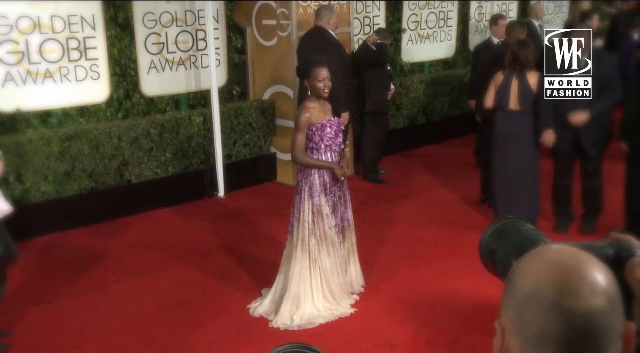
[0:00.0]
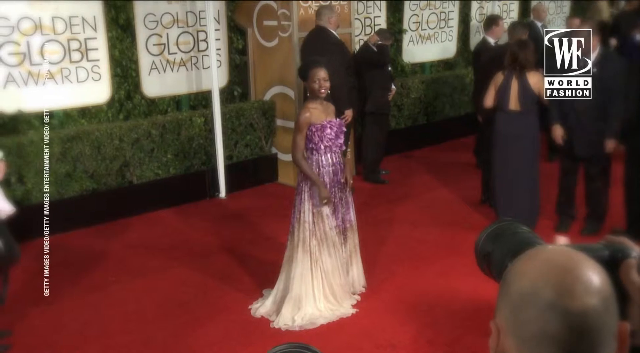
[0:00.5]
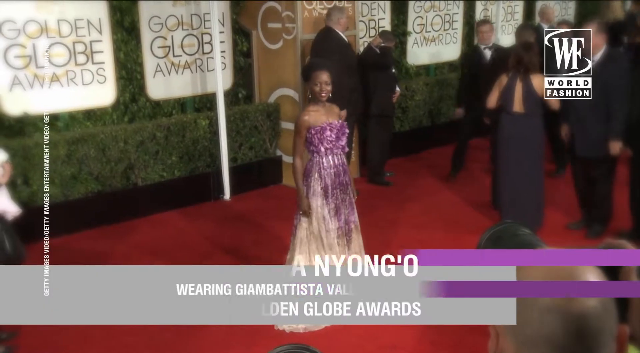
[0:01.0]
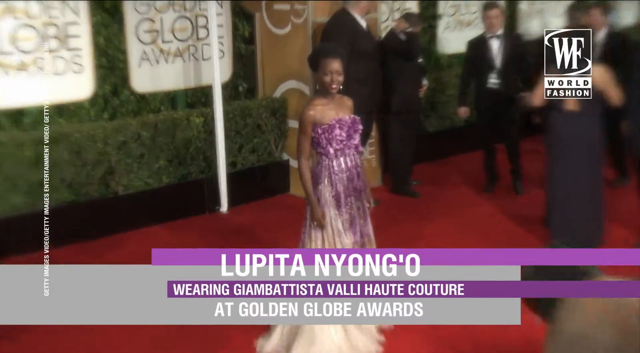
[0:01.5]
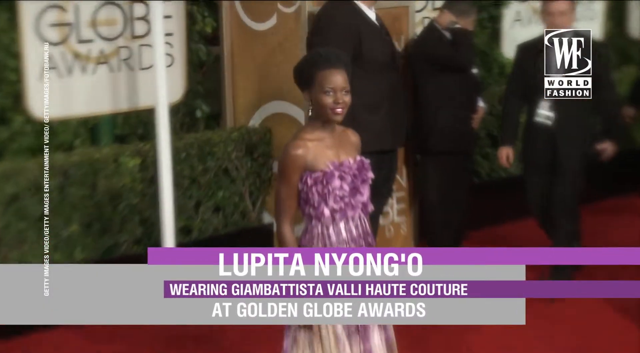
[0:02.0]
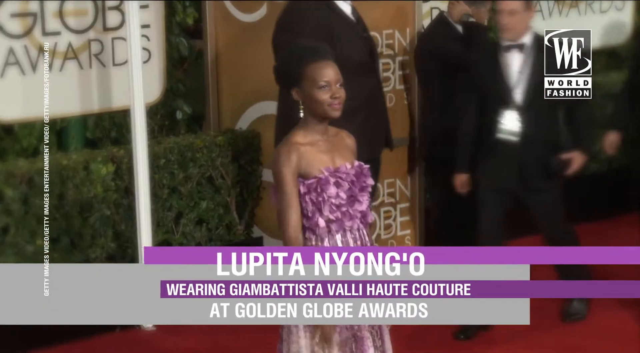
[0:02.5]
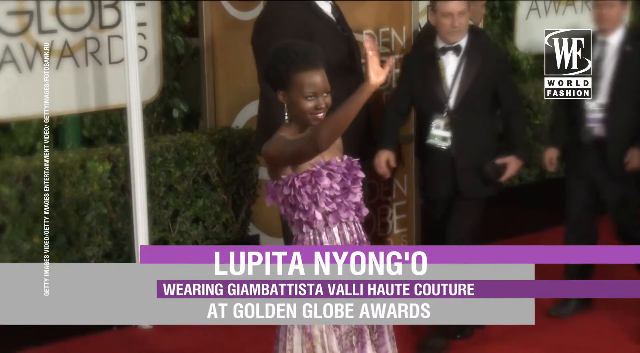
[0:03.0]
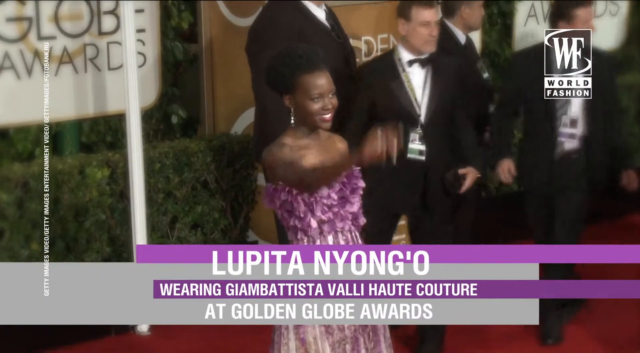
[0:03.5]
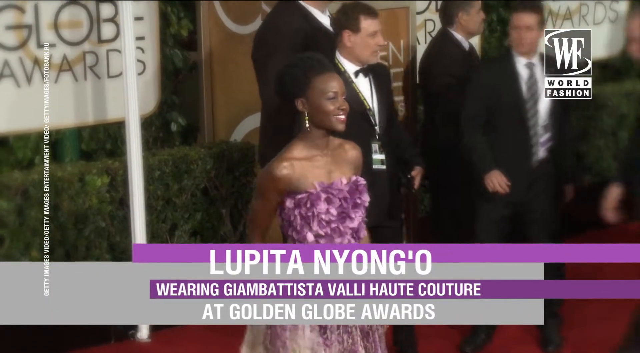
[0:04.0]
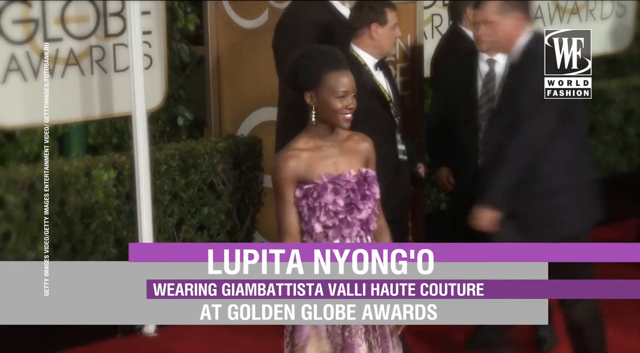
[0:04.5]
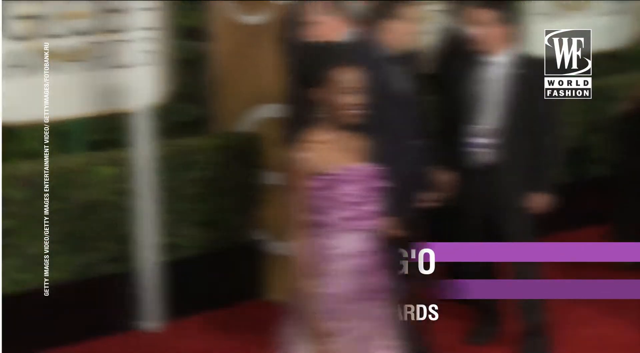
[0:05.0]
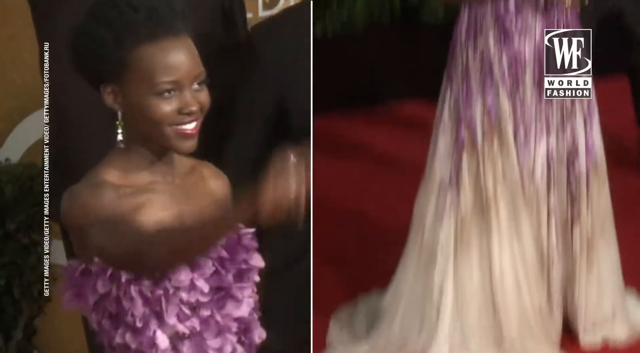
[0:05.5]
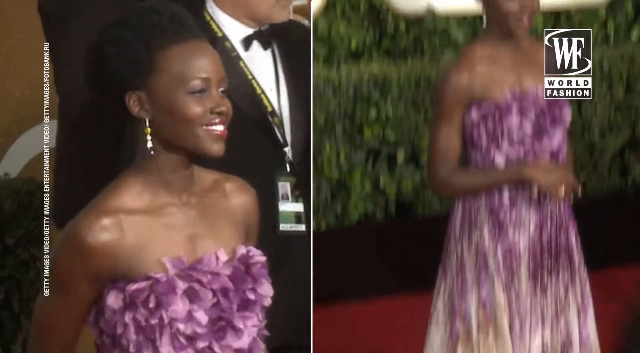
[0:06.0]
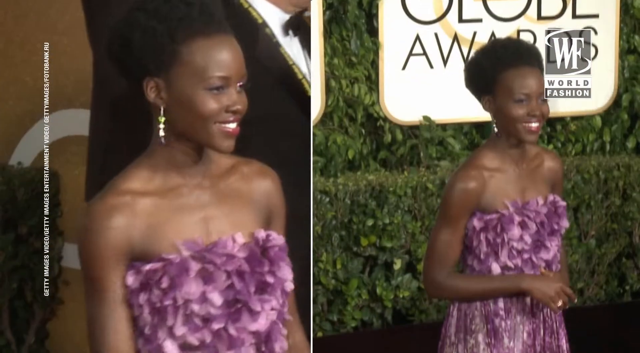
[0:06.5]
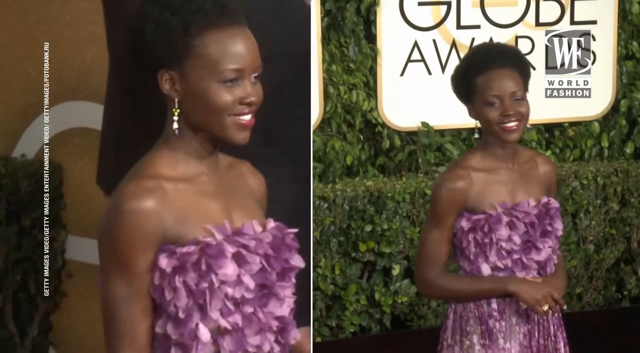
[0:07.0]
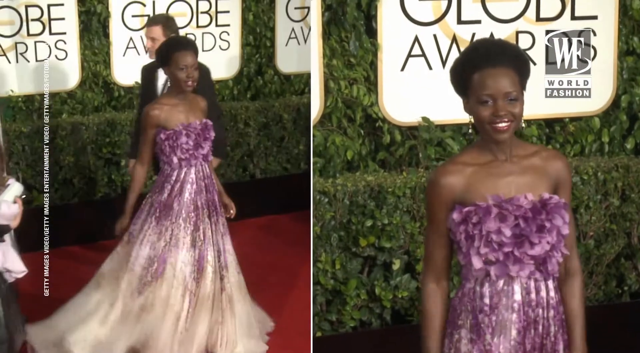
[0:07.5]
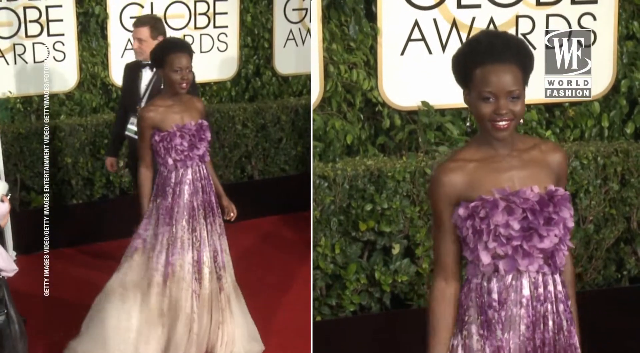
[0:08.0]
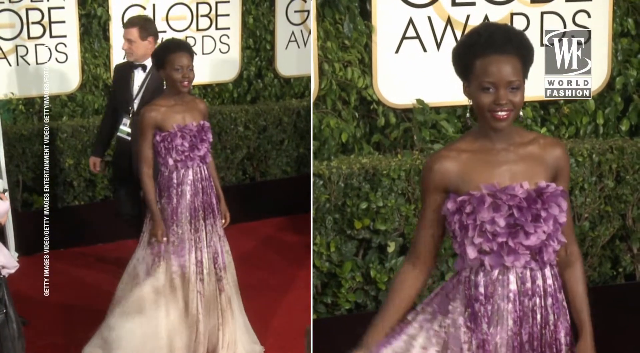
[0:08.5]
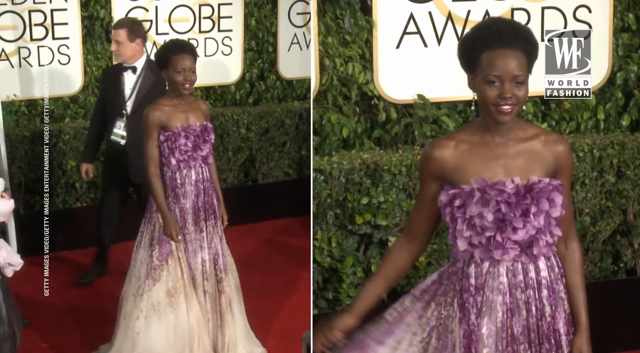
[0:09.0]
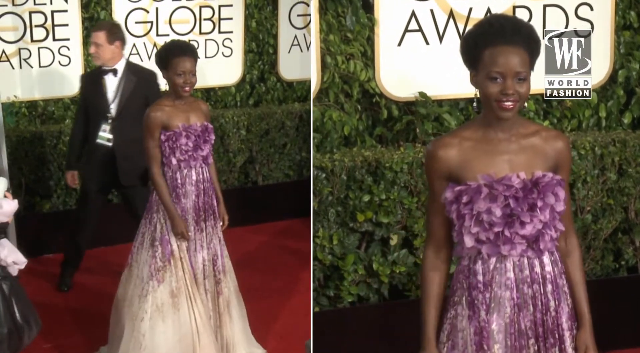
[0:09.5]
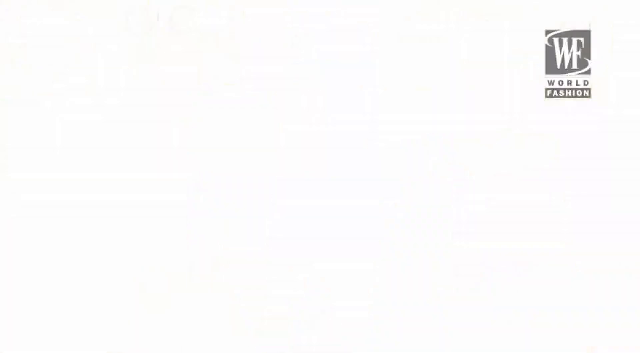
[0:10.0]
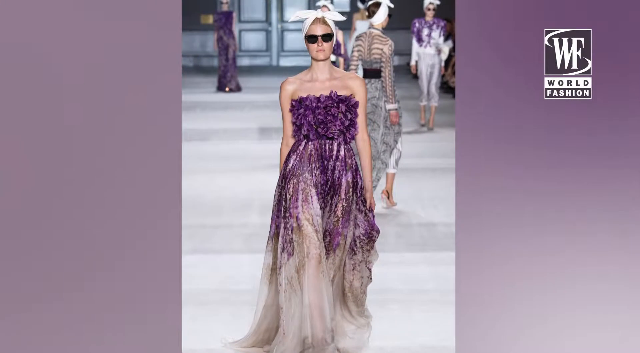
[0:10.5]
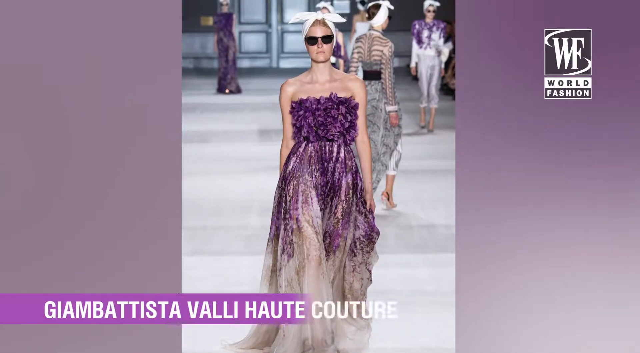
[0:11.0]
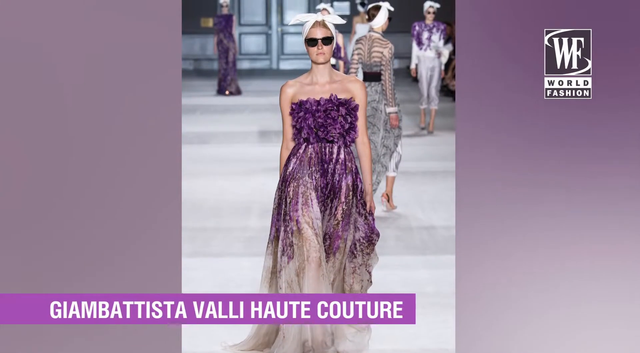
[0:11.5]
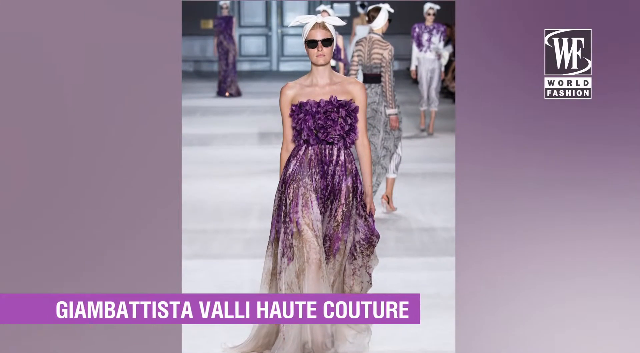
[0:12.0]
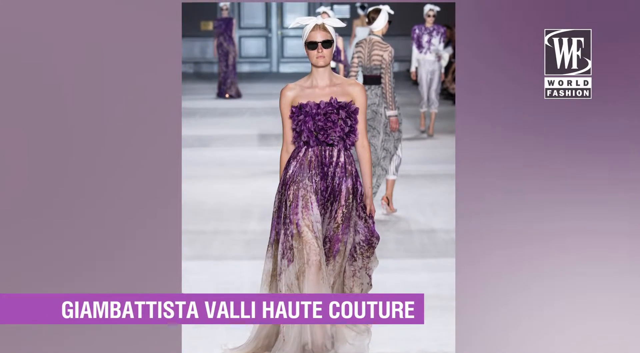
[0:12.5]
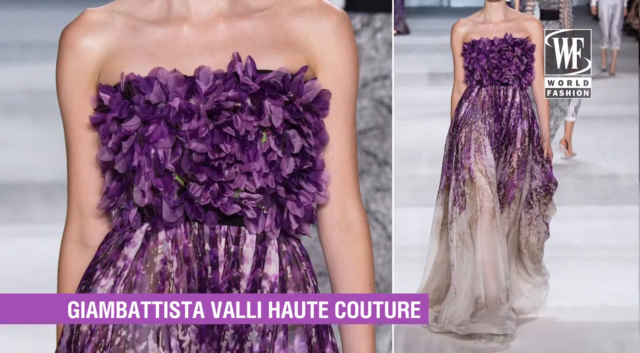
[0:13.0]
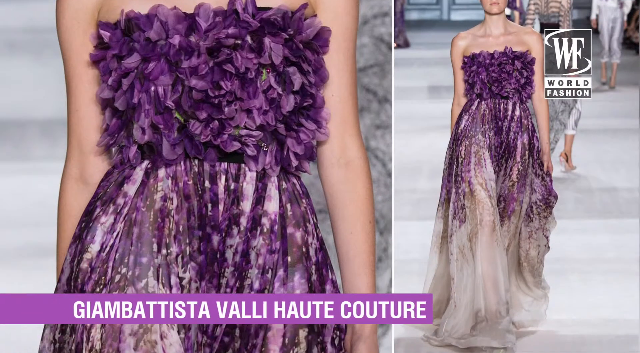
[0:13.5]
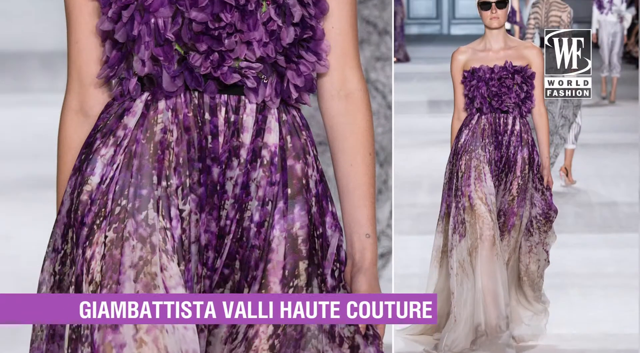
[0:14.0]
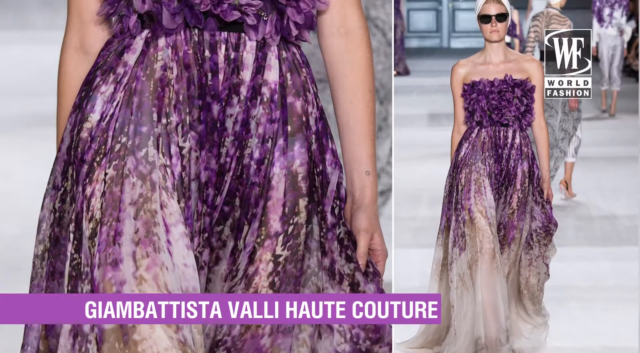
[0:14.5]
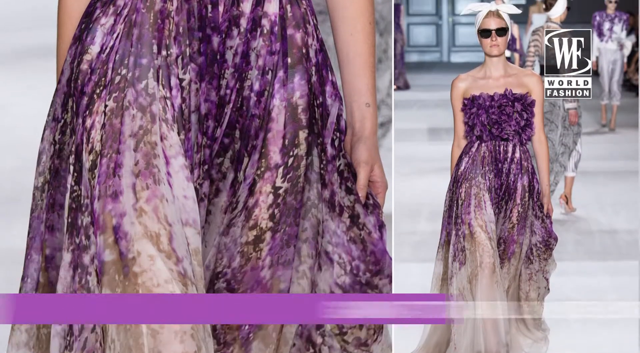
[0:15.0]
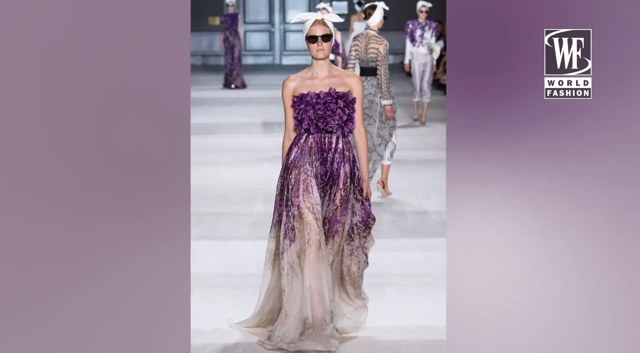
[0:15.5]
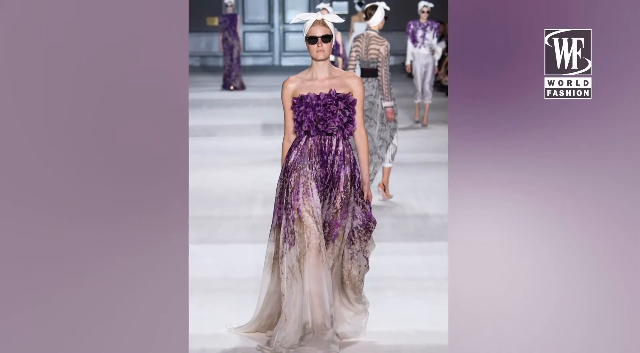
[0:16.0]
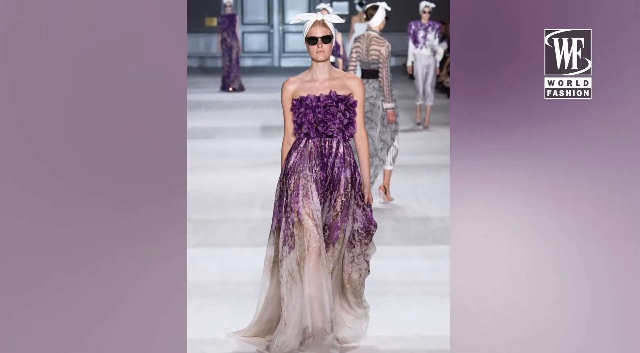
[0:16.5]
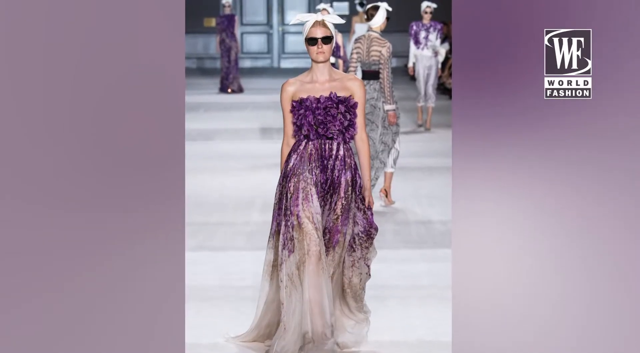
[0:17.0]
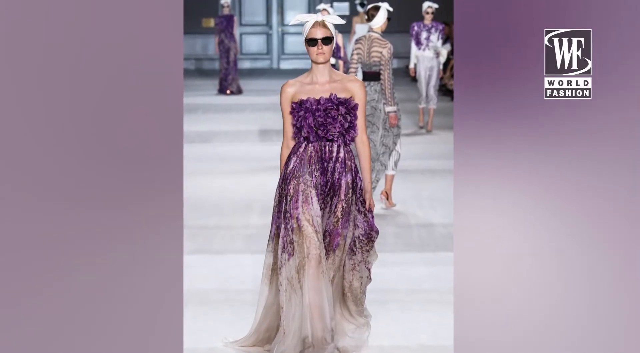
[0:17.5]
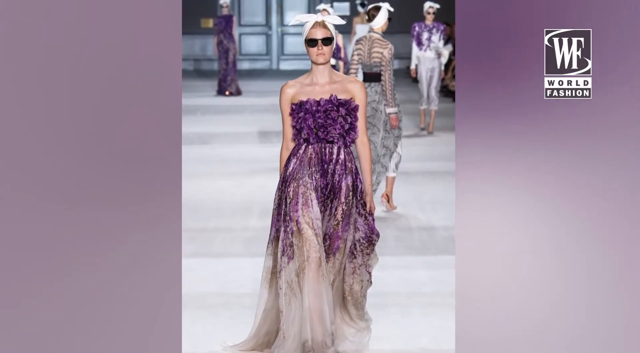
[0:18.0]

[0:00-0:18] A red carpet is shown, and on the wall in the background are five white squares, each with "Golden Globe Awards" inside. Standing on the red carpet is a Black woman in a purple dress that fades from purple down to white and reaches down to the ground. Along the bottom of the screen, text begins "Lupita Nyong'o wearing Giambattista Valli" and ends "at Golden Globe Awards." The camera then focuses very close on her, and in the background men wear black tuxedos with white bow ties. Next, another woman, a white woman, is shown wearing the same dress, with text reading "Giambattista Valli." In the top right corner of the screen is a square with the letters "WF" in it and "World Fashion" underneath. Men in tuxedos are also visible in the background behind this woman.